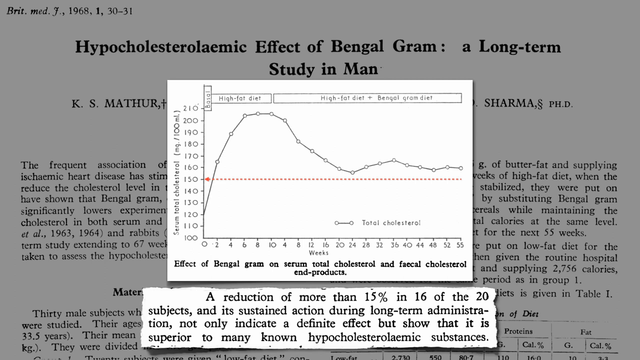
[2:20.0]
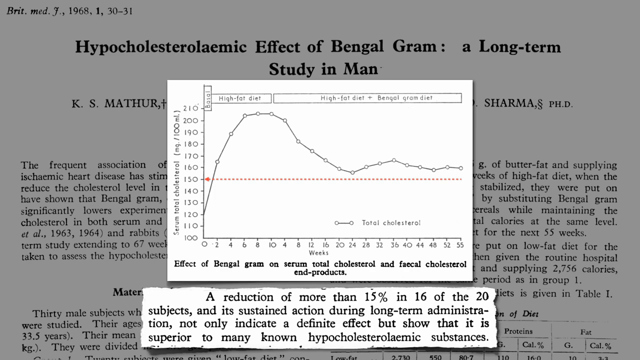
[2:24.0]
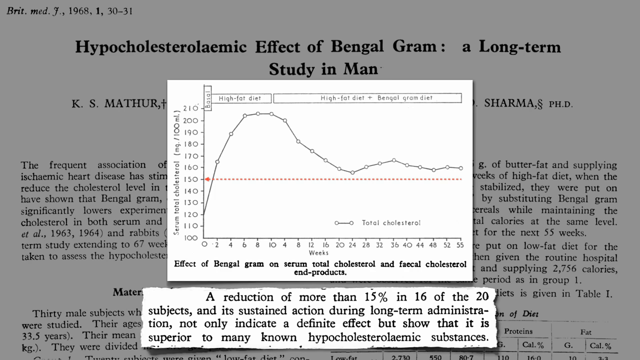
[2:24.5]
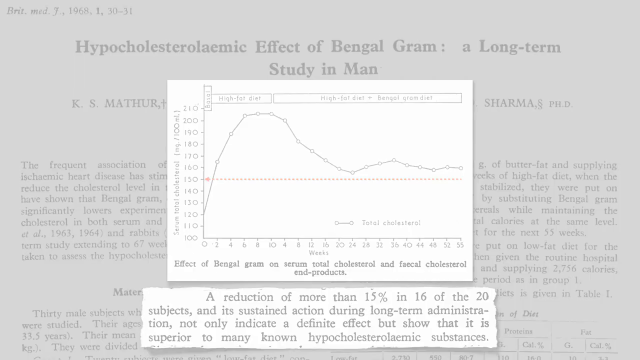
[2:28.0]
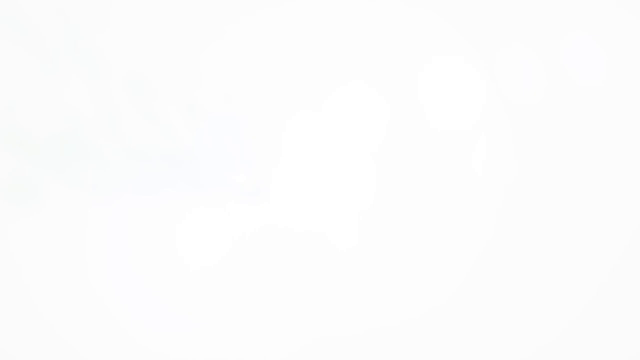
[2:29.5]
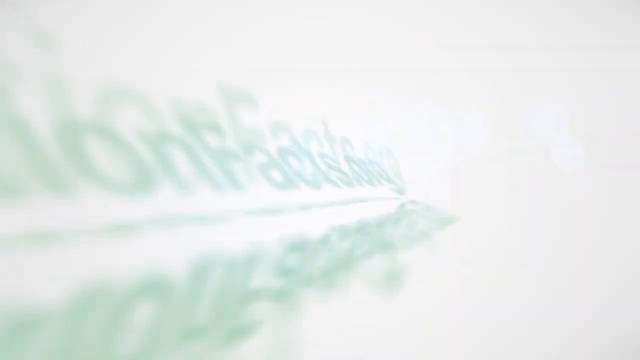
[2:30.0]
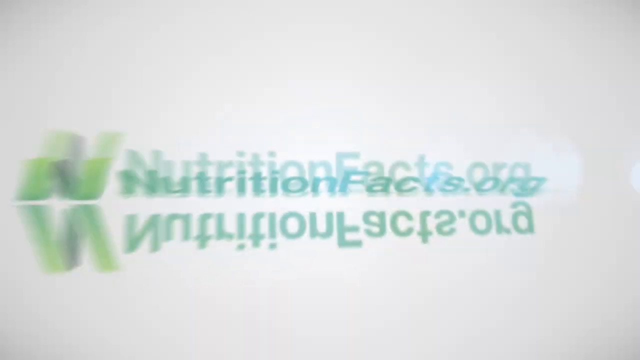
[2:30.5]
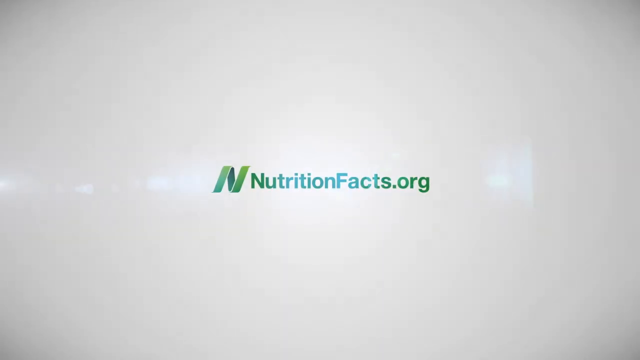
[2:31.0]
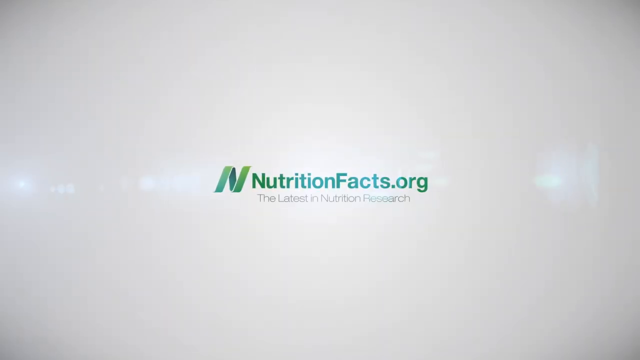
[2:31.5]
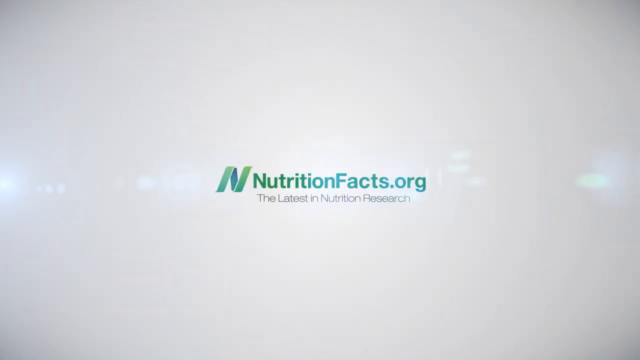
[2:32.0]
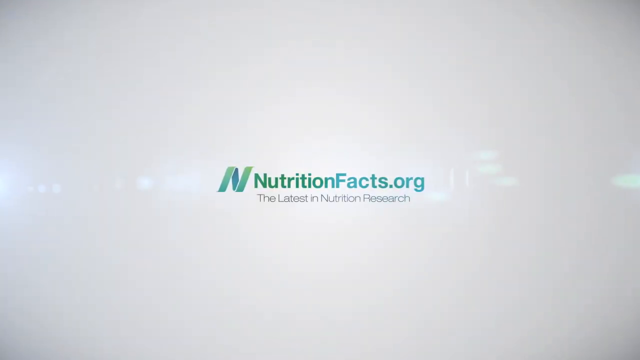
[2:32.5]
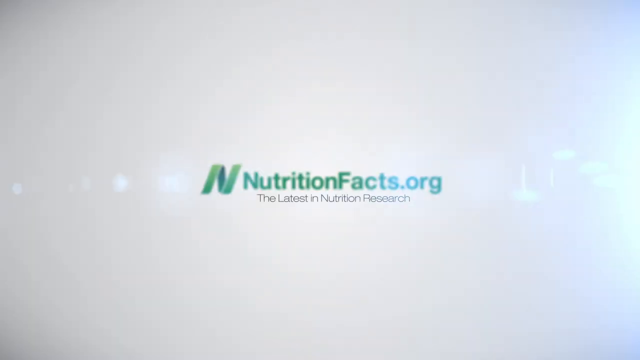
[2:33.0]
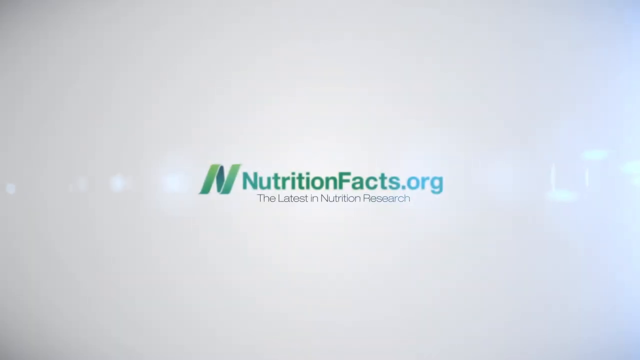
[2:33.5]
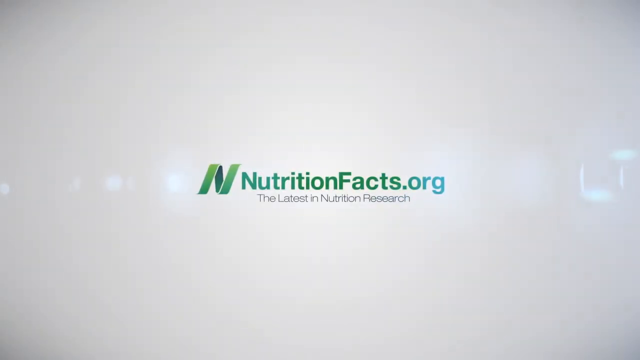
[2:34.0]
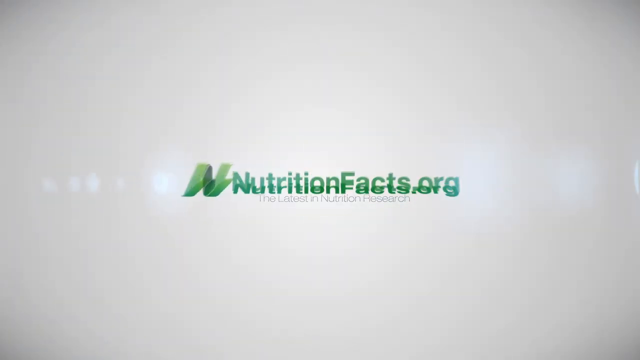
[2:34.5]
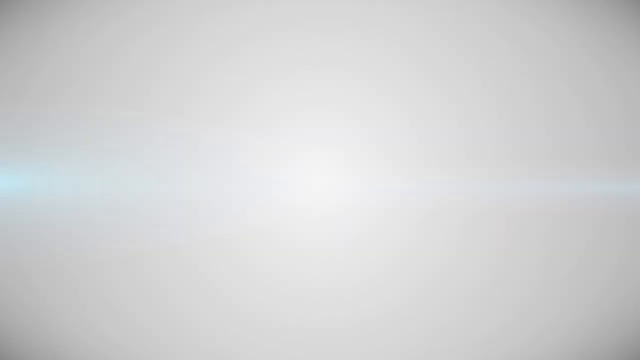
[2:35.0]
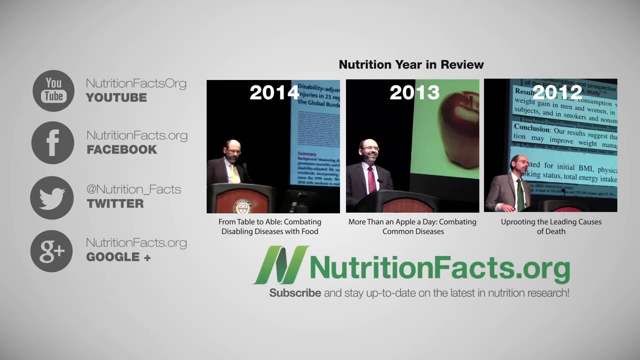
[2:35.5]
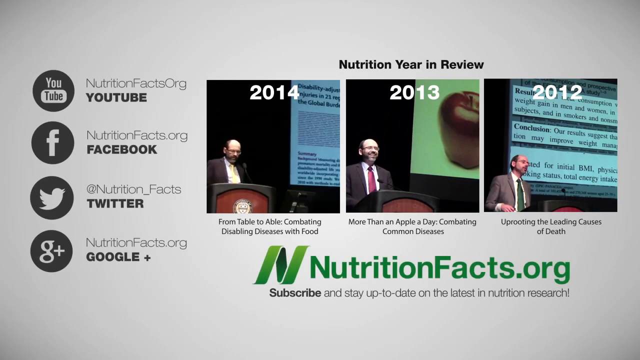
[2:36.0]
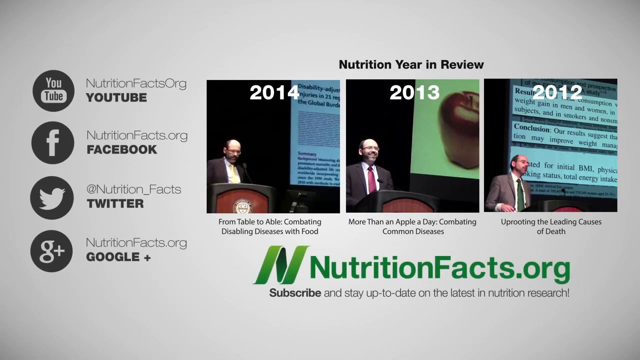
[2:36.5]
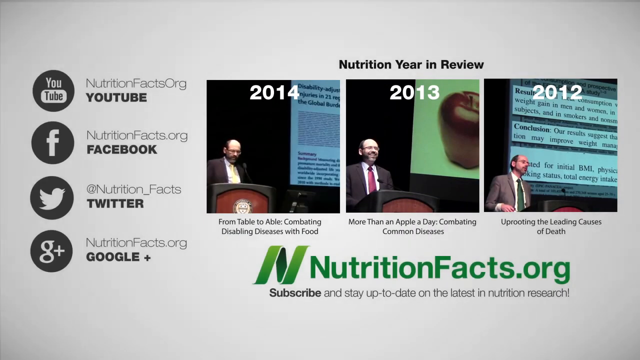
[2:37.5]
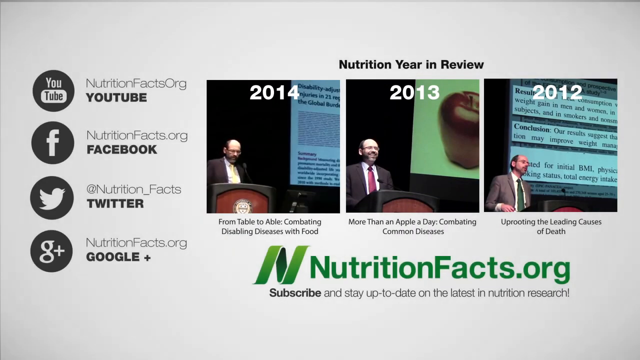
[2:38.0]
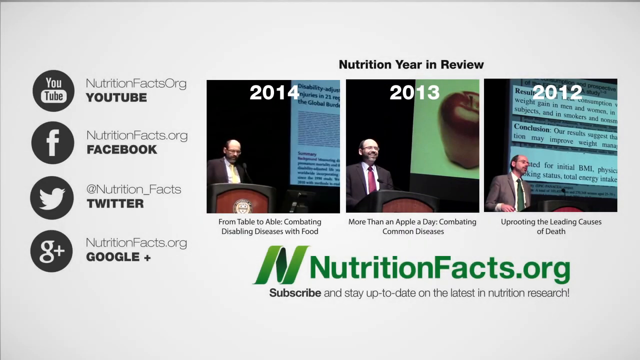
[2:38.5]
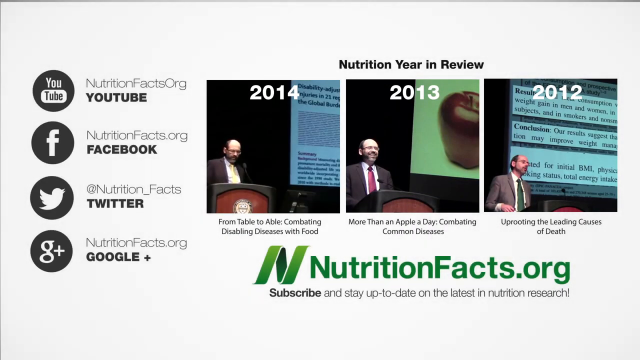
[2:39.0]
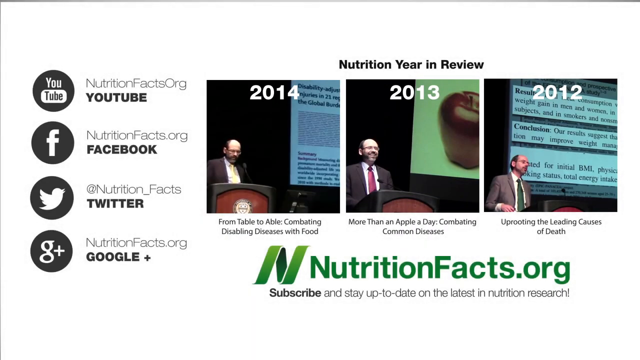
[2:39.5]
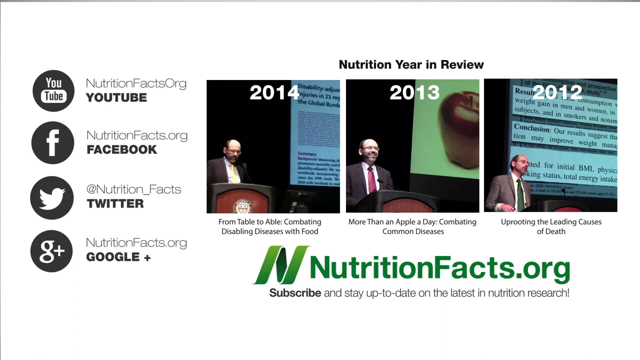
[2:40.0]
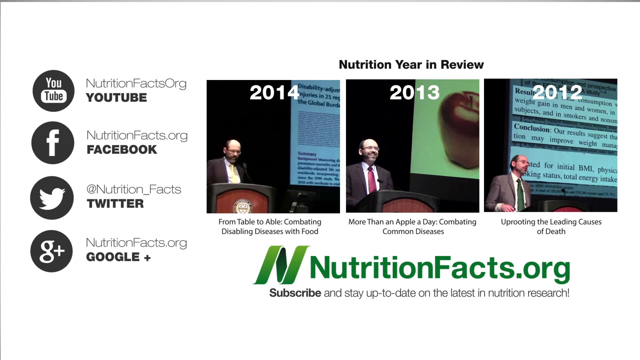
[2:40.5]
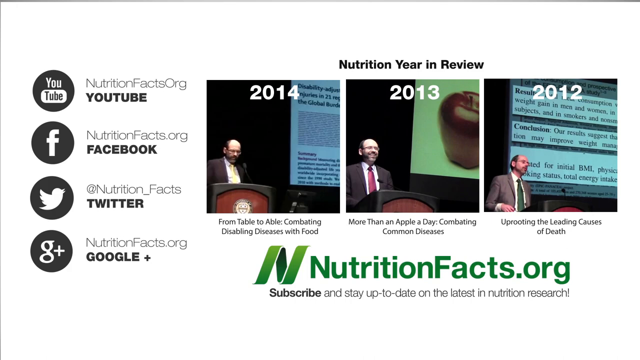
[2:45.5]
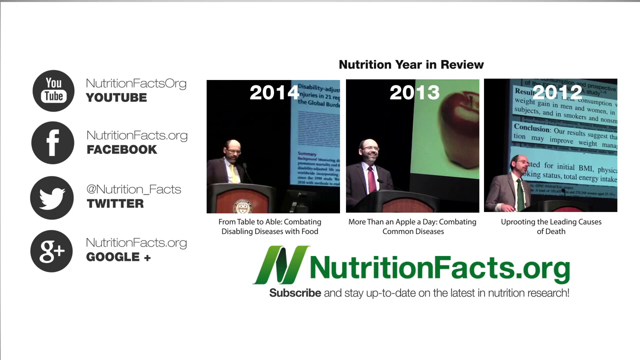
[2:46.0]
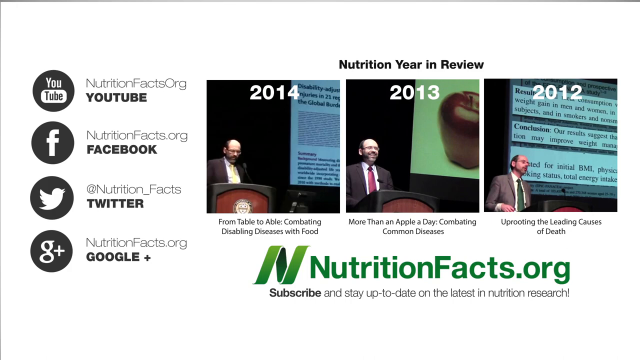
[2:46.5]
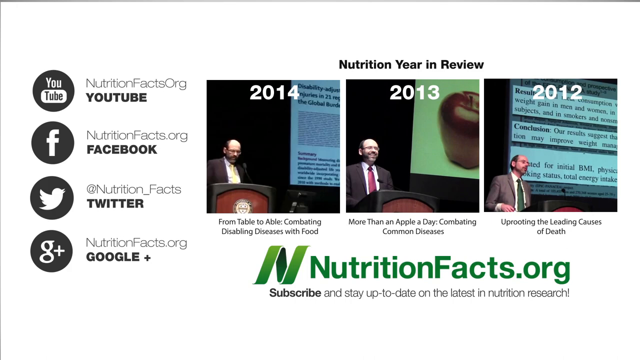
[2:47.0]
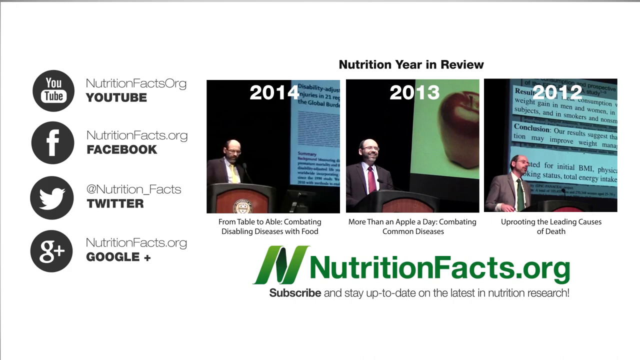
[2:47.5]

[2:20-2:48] A graph shows the effects of Bengal gram on serum total cholesterol and fecal cholesterol, with text about a reduction of more than 15% in 16 of the 20 subjects. The graph starts at 120 cholesterol milligrams per 1000 milliliters, rises to about 200 within the first six weeks, then drops and stabilizes around week 20 at around 160. A red dotted line runs across the graph at the 150 mark, and the graph is for a study of the hypocholesterolemic effect. A white screen follows, and a green logo appears reading "nutritionfacts.org", with a green N as the logo; the N and the F are capitalized and everything else is lowercase. Underneath, smaller black writing reads "the latest in nutrition research". The view zooms out to an end screen reading "nutrition in the year in review, 2014, 2013, and 2012". YouTube, Facebook, Twitter and Google Plus are listed, all as nutritionfacts.org. Under the logo, black text reads "subscribe or stay up to date on the latest in nutrition research". Under the pictures for 2014, 2013 and 2012 are, respectively, "from table to able, combating disabling diseases with food", "more than an apple a day, comparing common diseases" and "uprooting the leading causes of death".